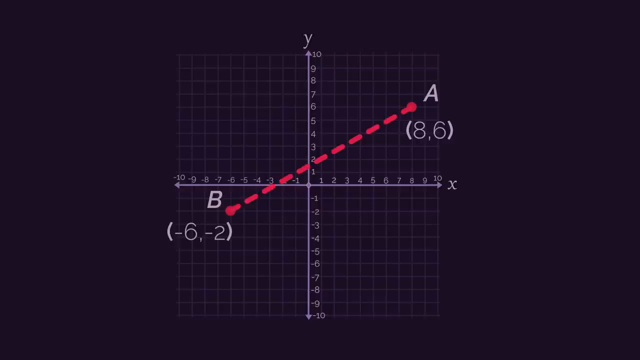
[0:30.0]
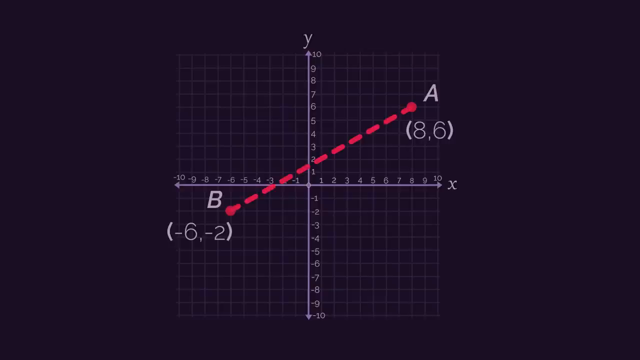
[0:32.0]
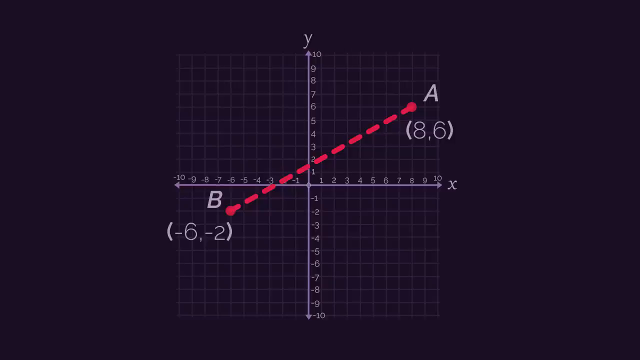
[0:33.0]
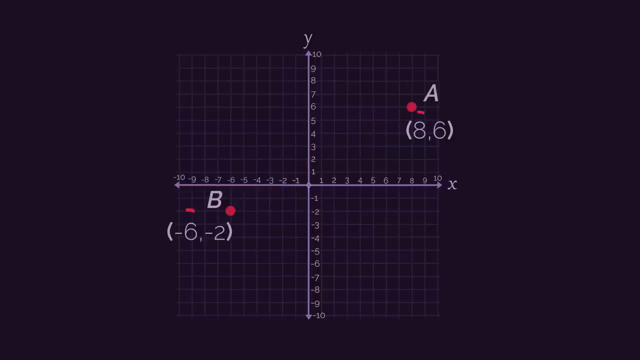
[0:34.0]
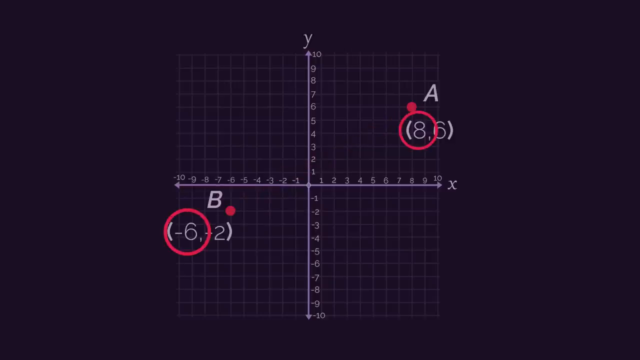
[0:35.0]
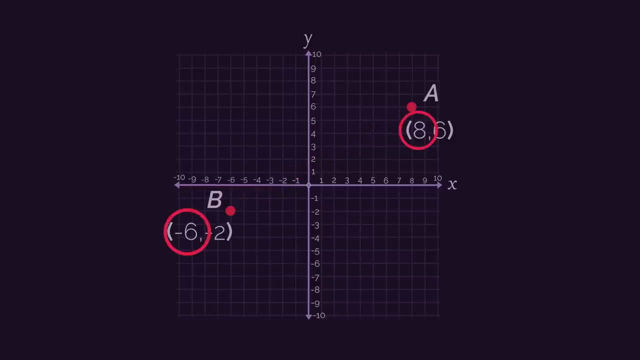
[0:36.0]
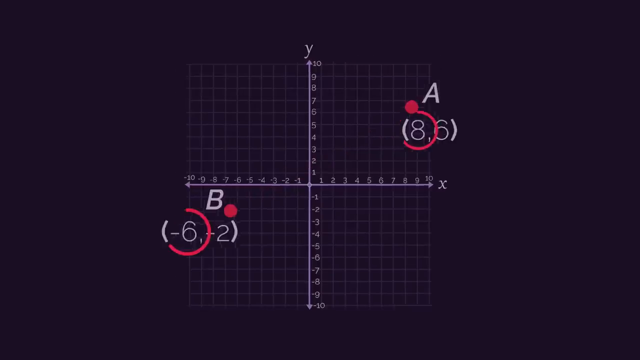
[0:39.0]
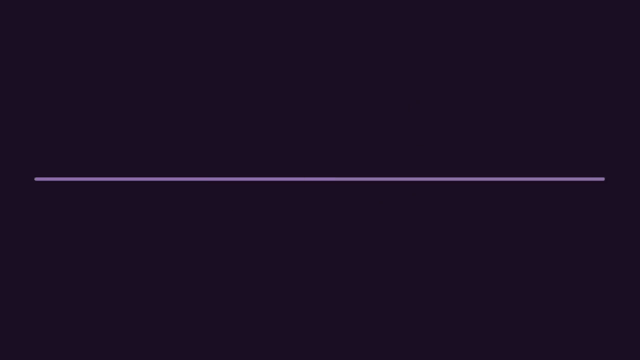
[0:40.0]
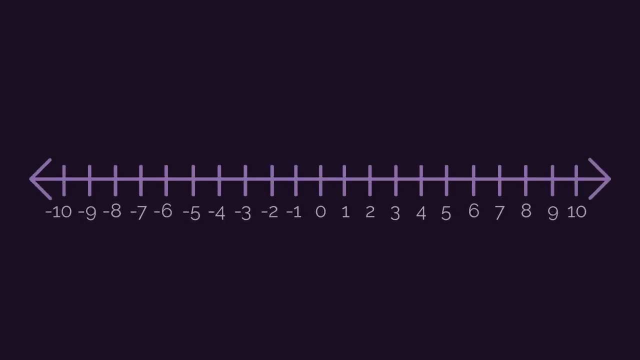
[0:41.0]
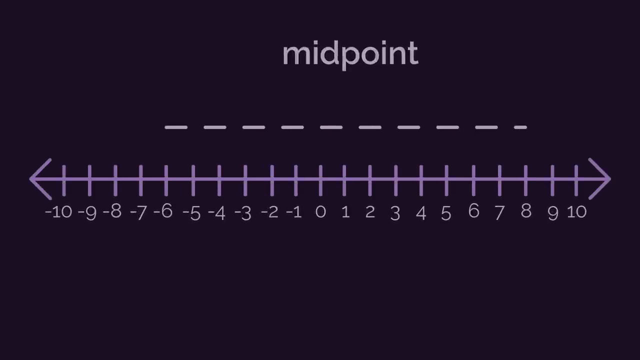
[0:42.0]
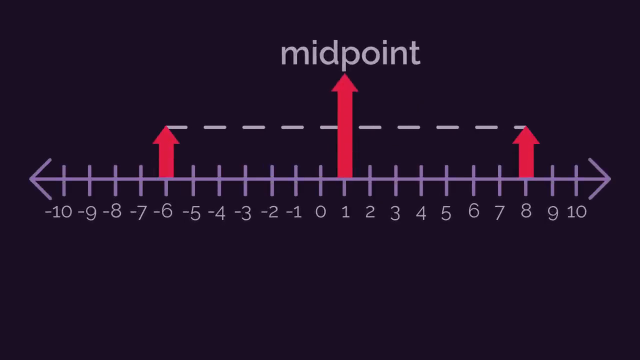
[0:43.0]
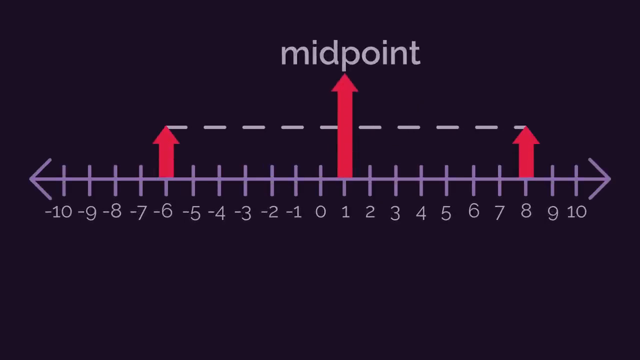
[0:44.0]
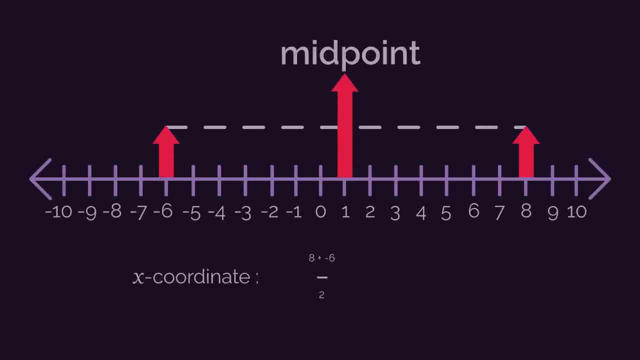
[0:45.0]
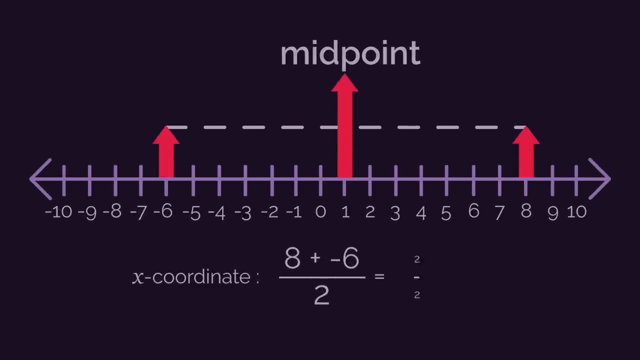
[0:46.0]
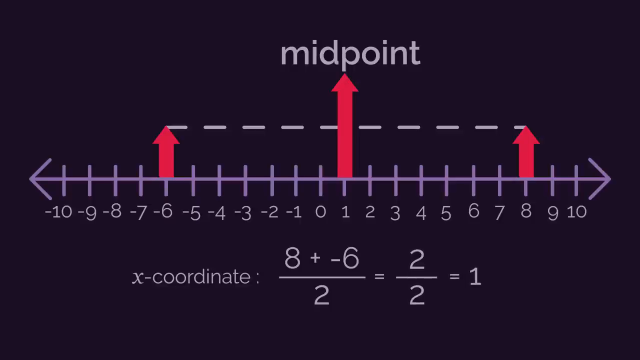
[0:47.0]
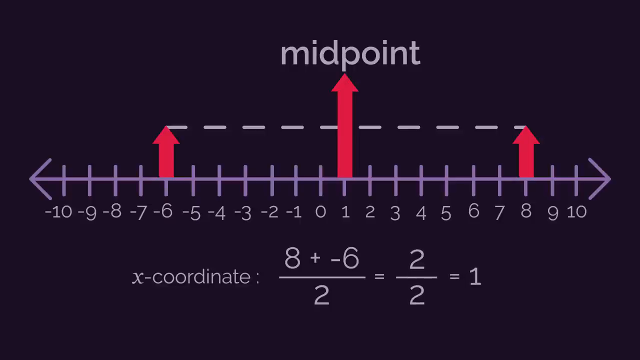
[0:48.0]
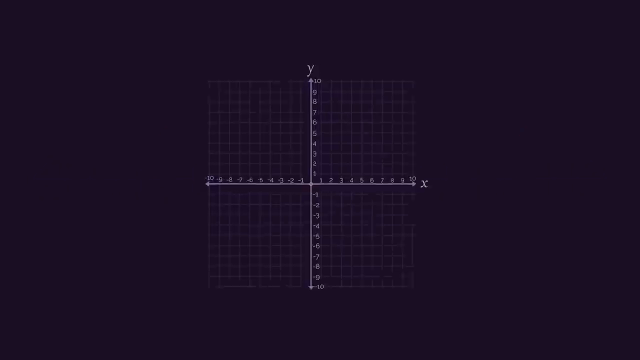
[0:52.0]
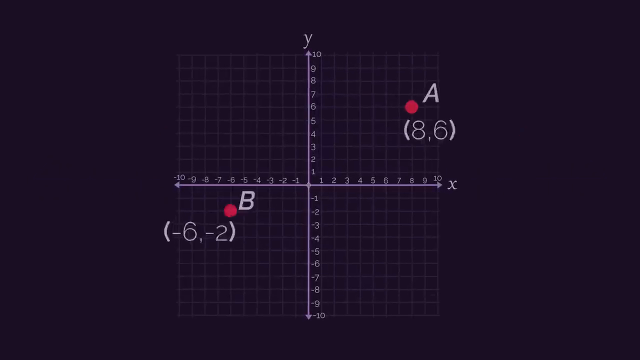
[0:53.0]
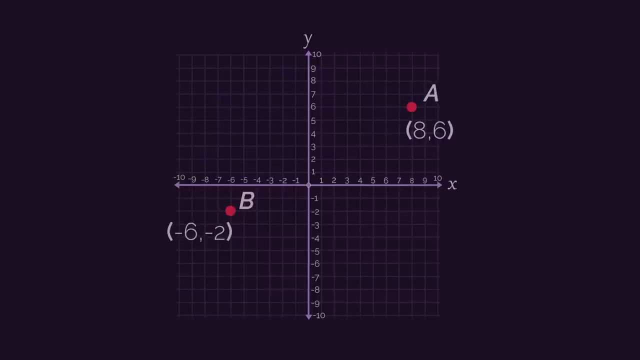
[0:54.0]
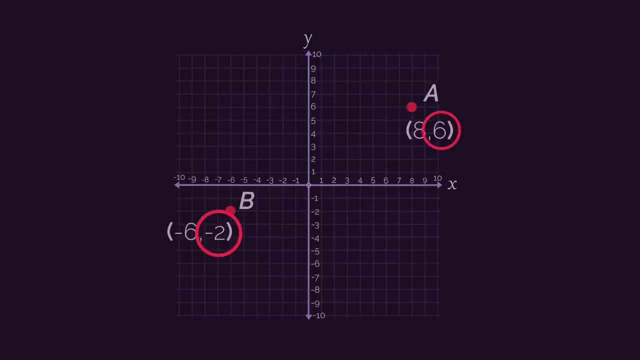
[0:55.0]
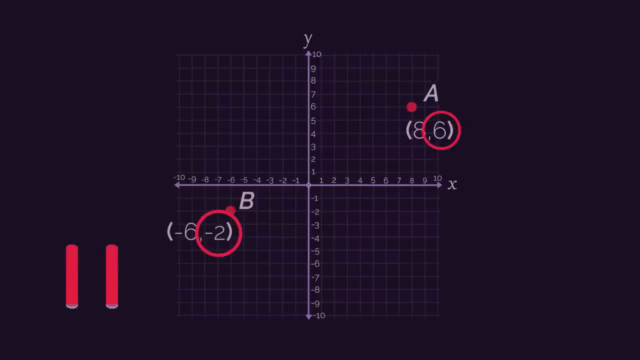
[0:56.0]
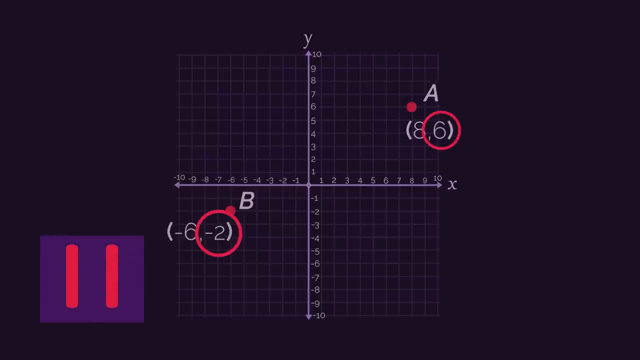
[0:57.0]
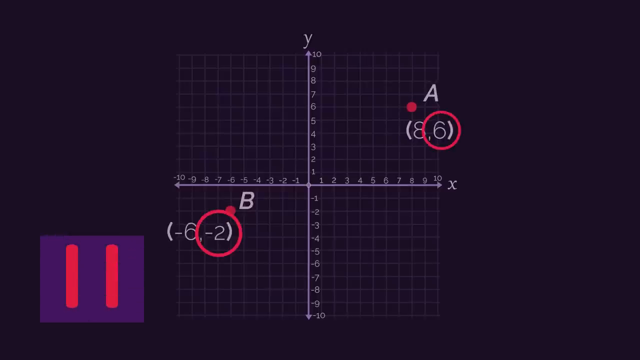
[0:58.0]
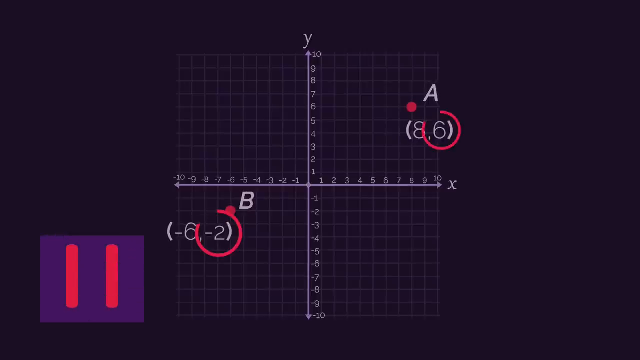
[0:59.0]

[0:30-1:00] After the red dotted line connects point A and point B, it disappears, and red circles appear around the number 8 under A and around the negative 6 of B. Another screen shows a number line, still on the black background, running from 10 to negative 10. It marks negative 6 and 8, with 1 in the middle of the two, showing that this is the midpoint, and it points to the word "midpoint". At the bottom, the math for determining the midpoint is shown, which in this case is 1. The video returns to the graph, where red circles appear around the 6 and the negative 2, the second numbers of each point.